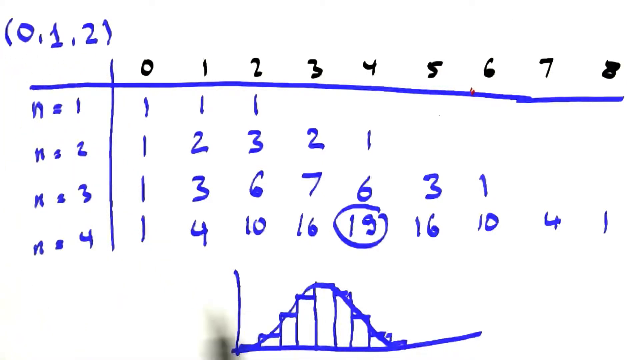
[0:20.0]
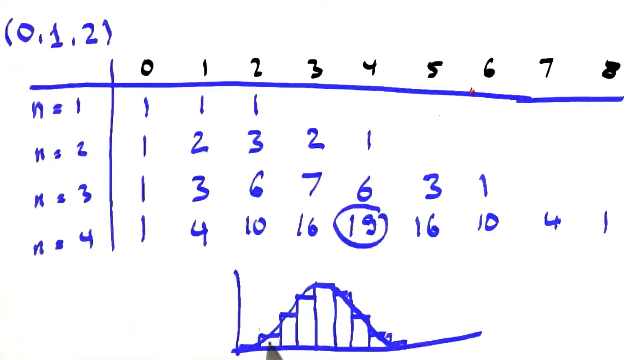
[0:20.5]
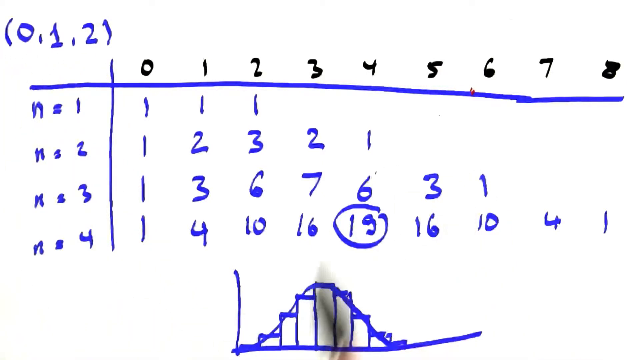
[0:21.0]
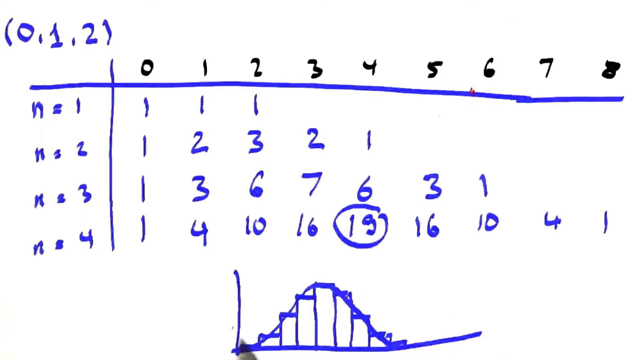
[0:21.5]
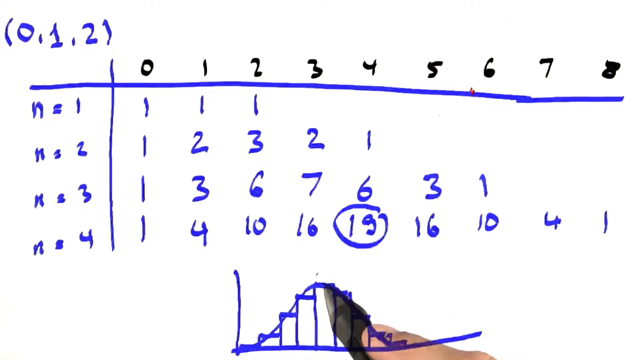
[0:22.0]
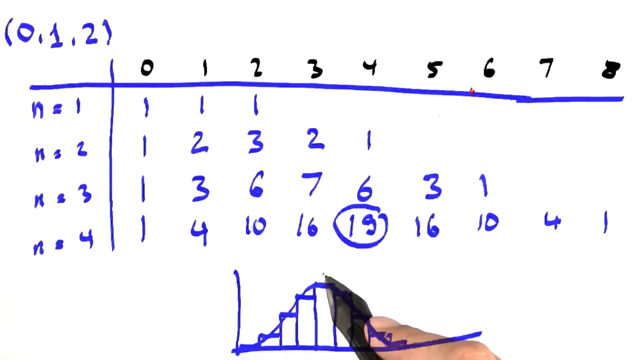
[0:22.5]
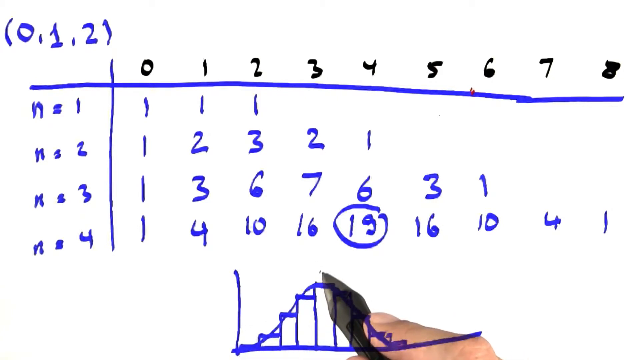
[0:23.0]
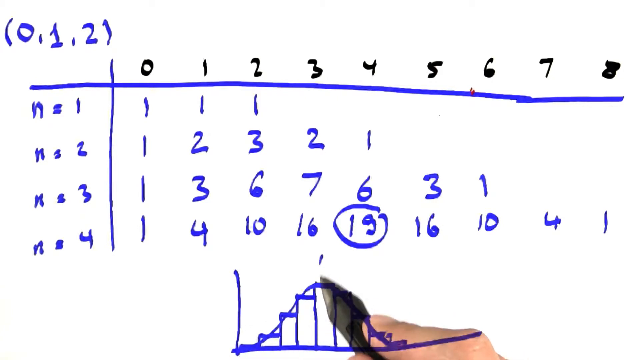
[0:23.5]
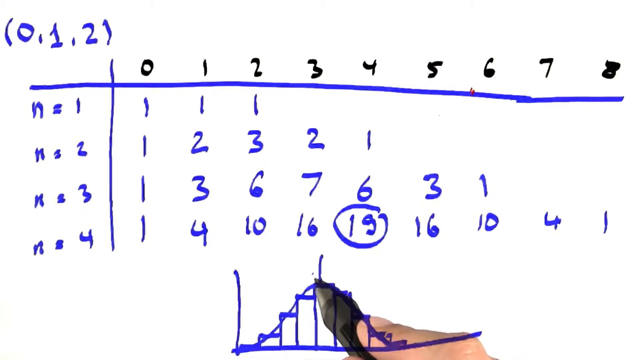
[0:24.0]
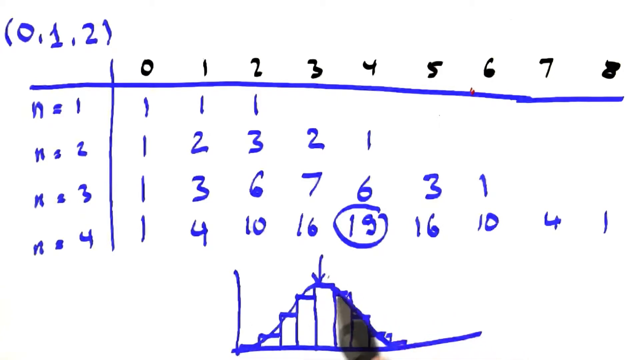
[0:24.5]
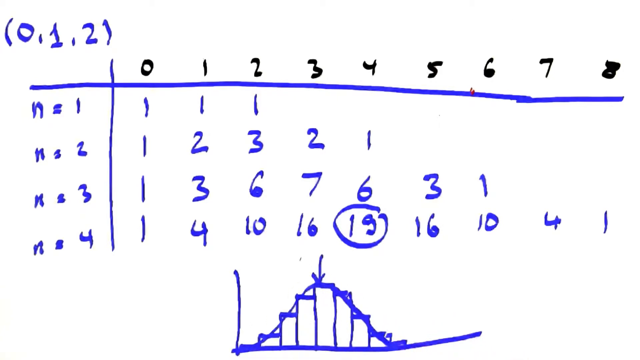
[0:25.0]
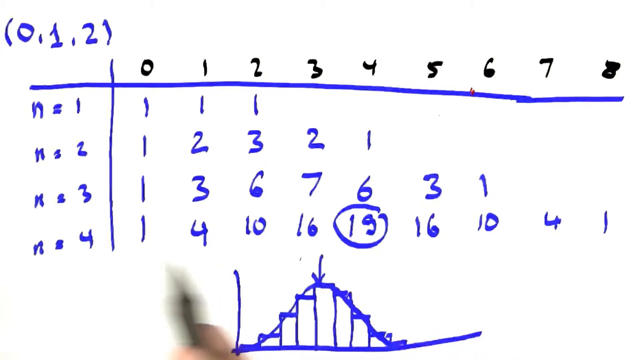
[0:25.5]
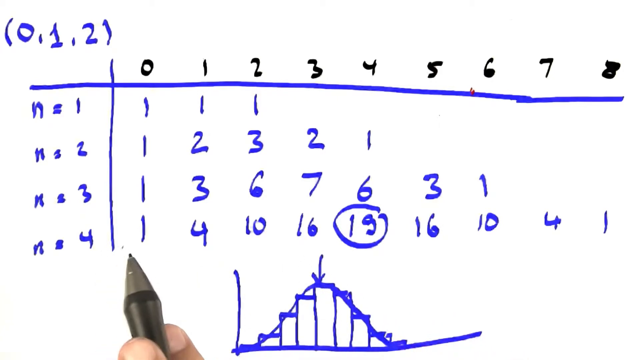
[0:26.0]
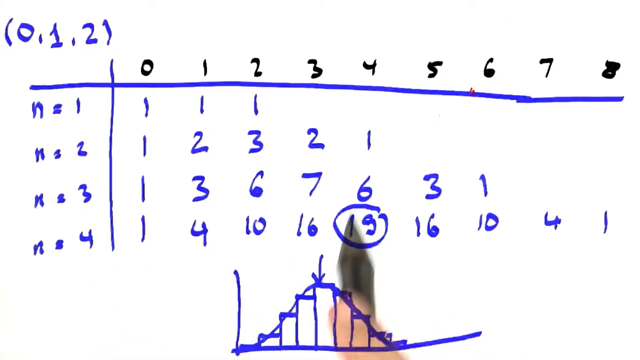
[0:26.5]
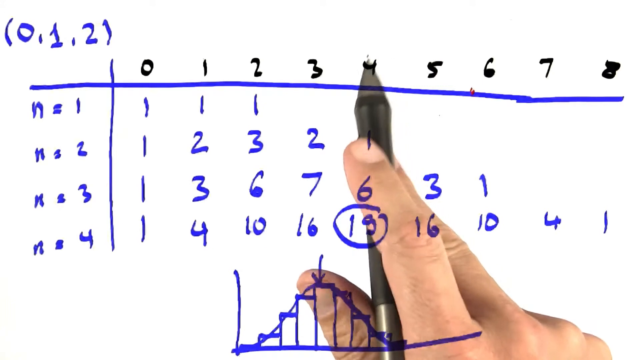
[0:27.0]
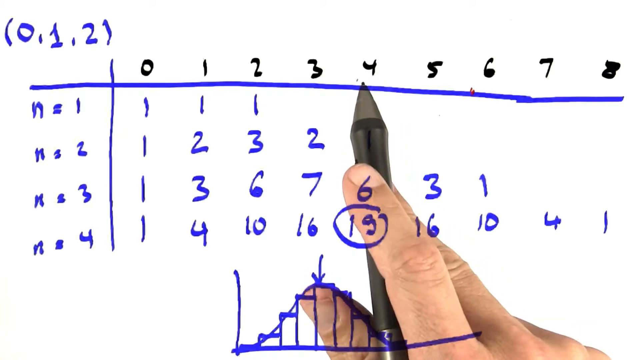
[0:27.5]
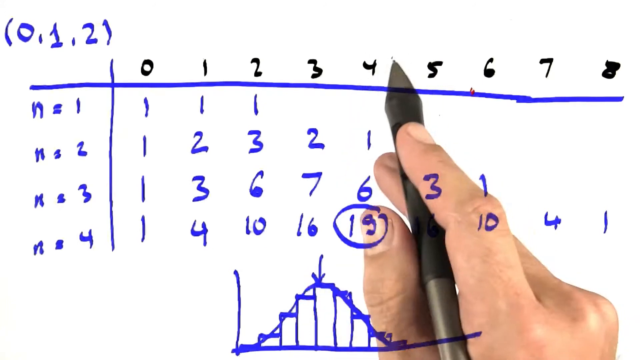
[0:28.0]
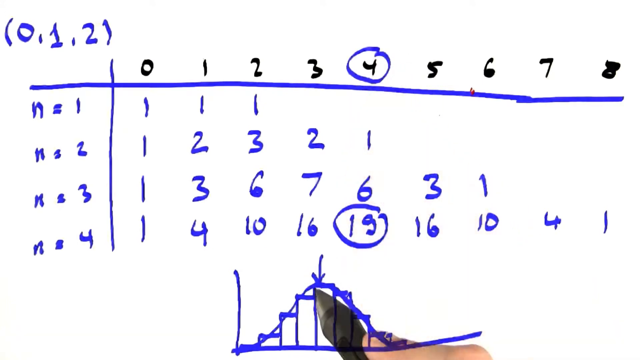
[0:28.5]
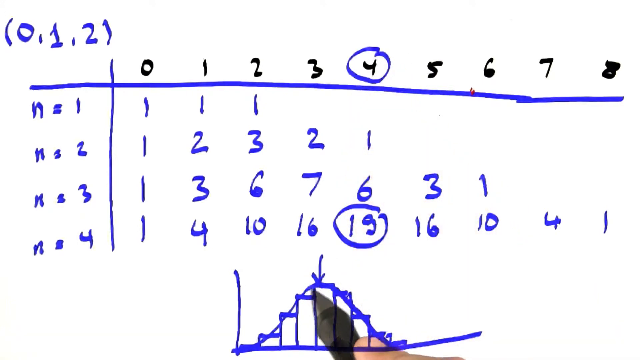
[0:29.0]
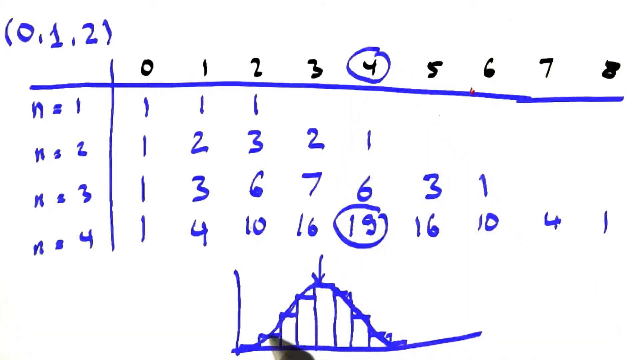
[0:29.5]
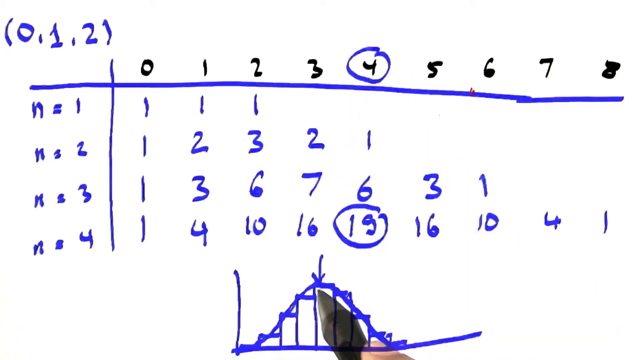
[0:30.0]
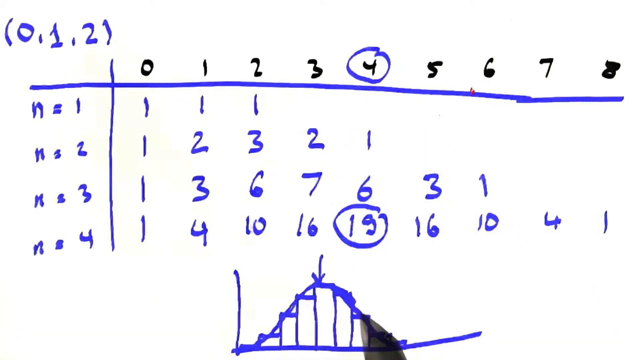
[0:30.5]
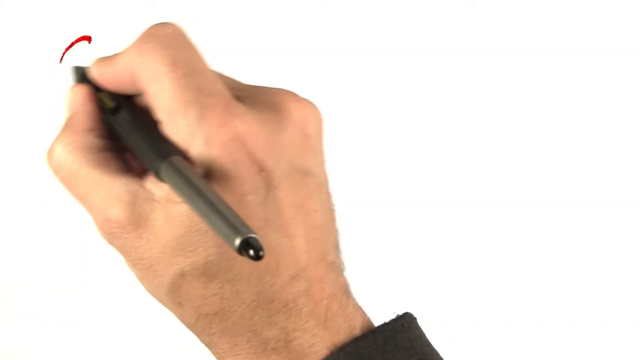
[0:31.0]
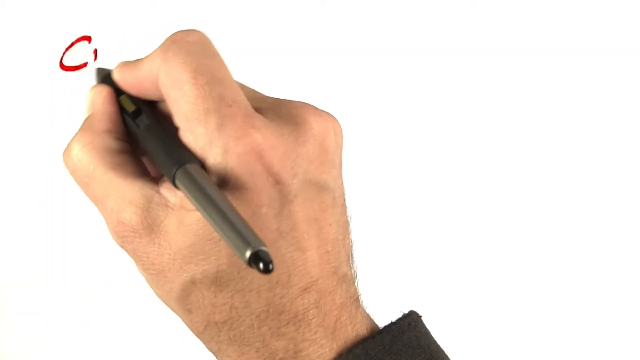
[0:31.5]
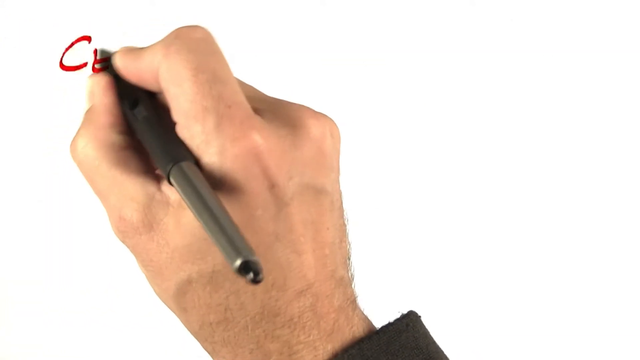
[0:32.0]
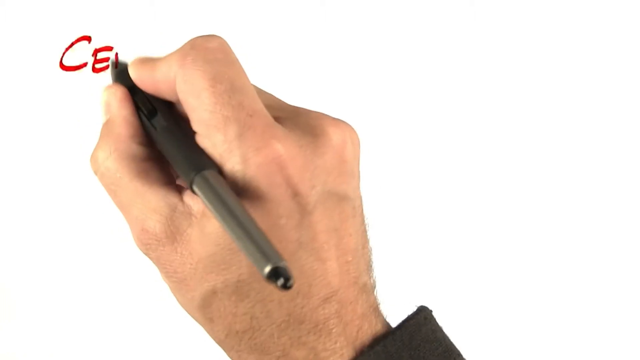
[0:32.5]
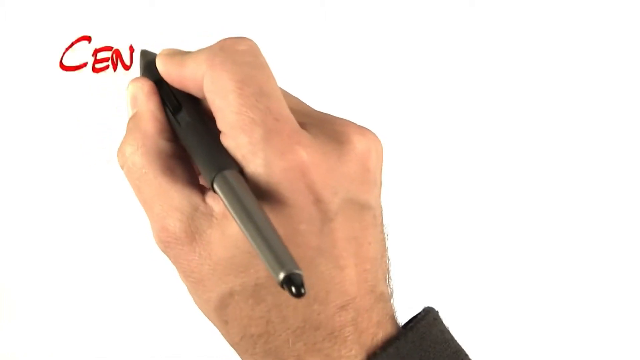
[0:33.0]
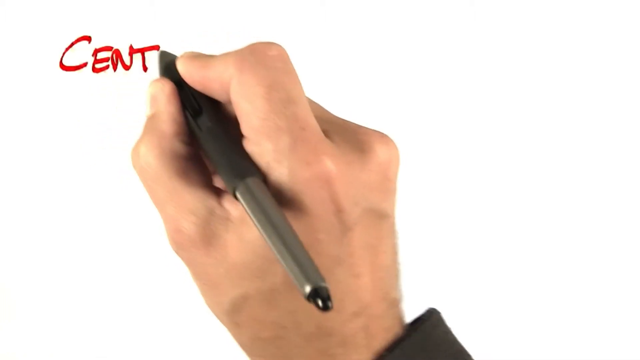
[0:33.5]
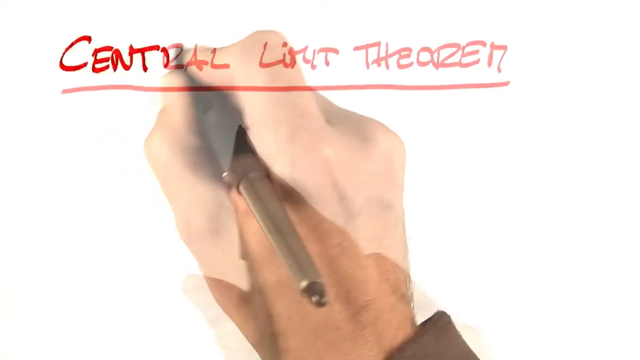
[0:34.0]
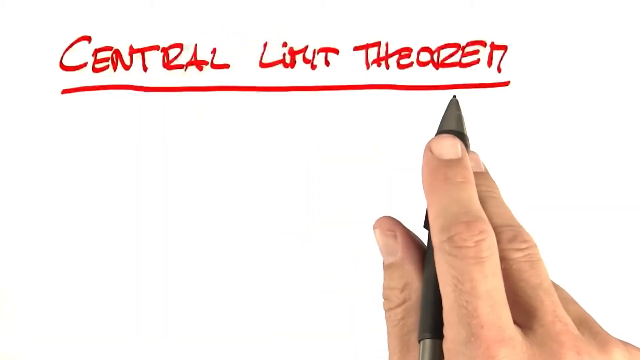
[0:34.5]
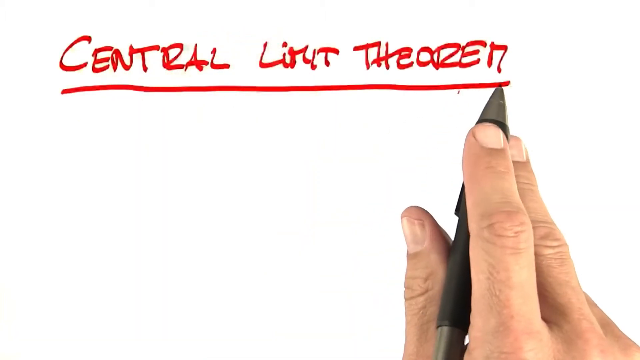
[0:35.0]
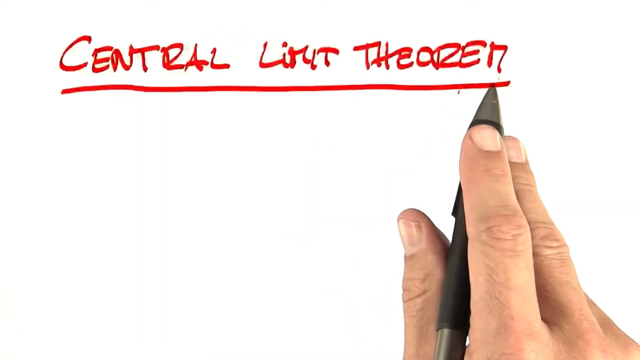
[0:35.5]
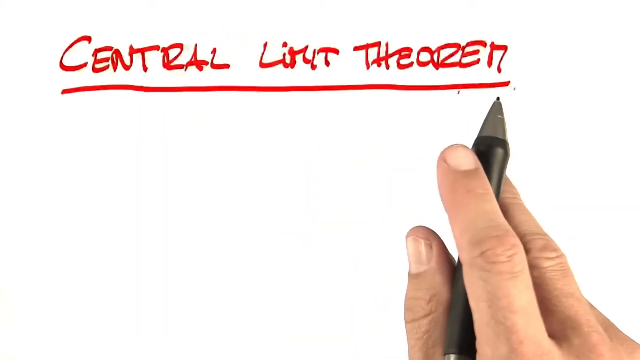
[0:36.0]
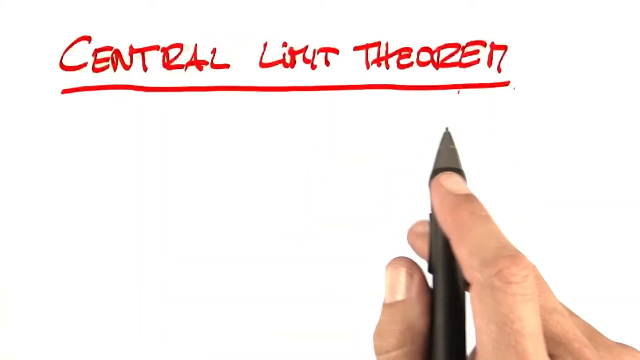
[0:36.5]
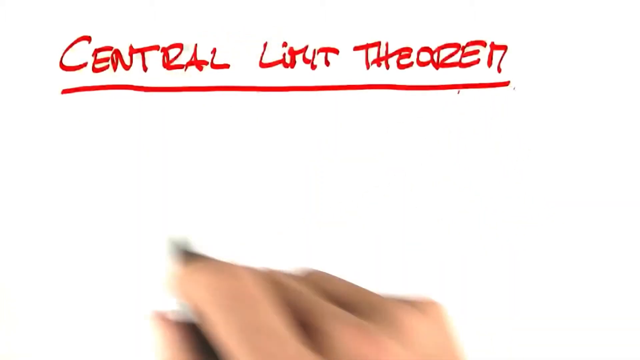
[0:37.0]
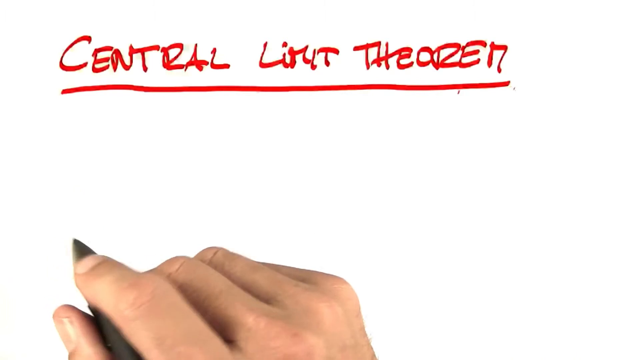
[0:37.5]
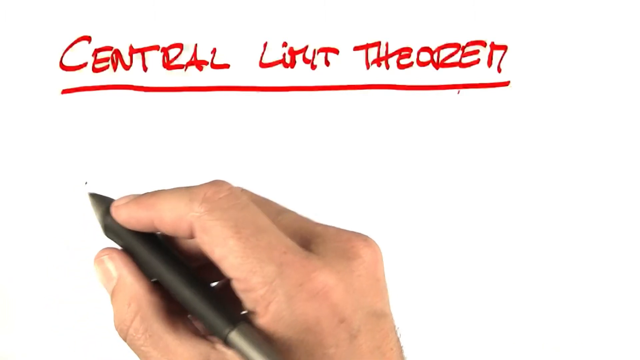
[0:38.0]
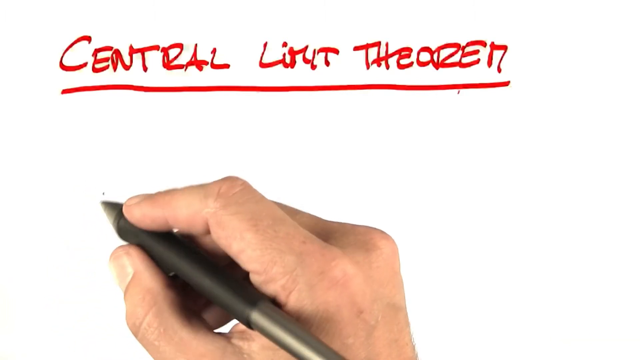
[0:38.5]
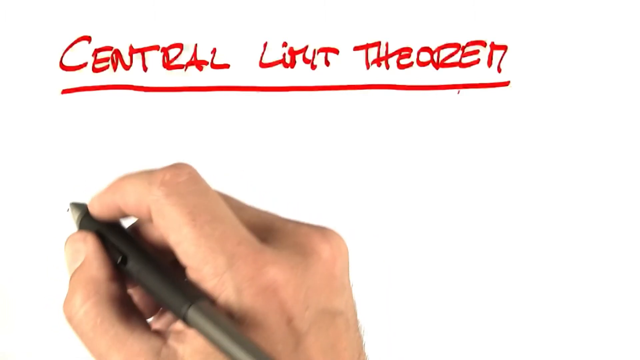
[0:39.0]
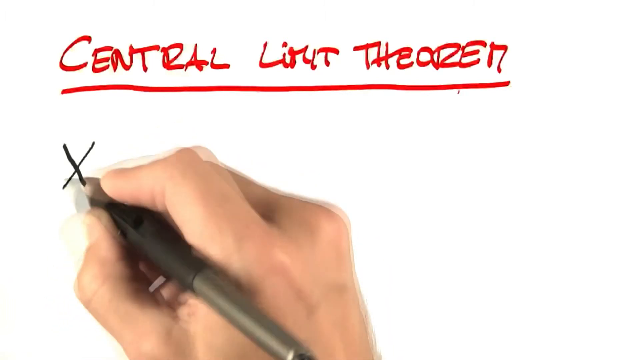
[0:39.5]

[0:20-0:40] A handwritten page shows the numbers 0, 1, 2, separated by commas, in parentheses at the top. Below that, the left-hand side of the page is crossed by a horizontal line near the top. Above the horizontal line, the numbers 1, 2, 3, 4, 5, 6, 7 and 8 are written in black. Below the horizontal line and to the left of the vertical line it says "n = 1", and going down "n = 2", "n = 3" and then "n = 4" at the bottom. Under the horizontal line are the rows of numbers "1, 1, 1", then "1, 2, 3, 2, 1", then "1, 3, 6, 7, 6, 3, 1", and in the last row "1, 4, 10, 16, 19, 16, 10, 4, 1". Below that is a drawing of seven bars that start quite short on the left, grow progressively taller until the fourth, and then grow shorter again. In the fourth row of numbers, the number 19 is circled in blue pen. A hand with a pen draws a downward-facing arrow at the tallest bar and then circles the number 4 at the top above it. Then the hand appears by itself on a white screen. With a red pen it writes "central limit theorem" and underlines it in red, then writes the letter X in black.